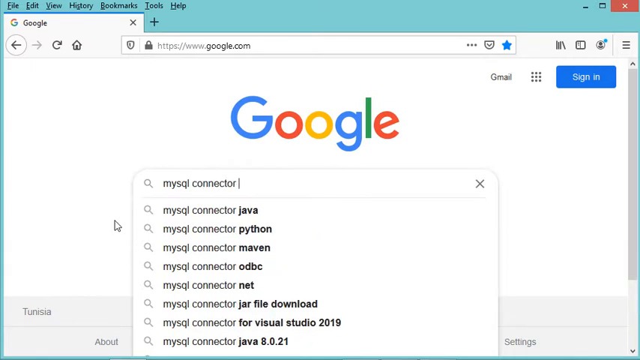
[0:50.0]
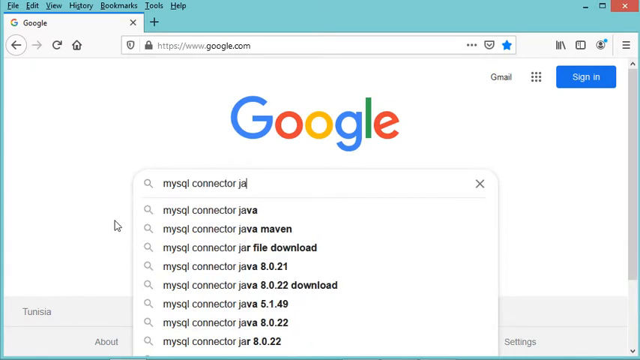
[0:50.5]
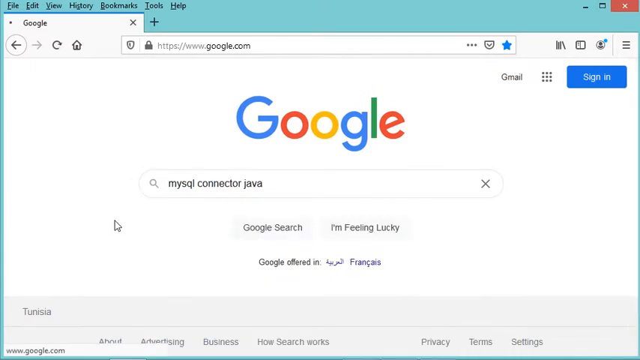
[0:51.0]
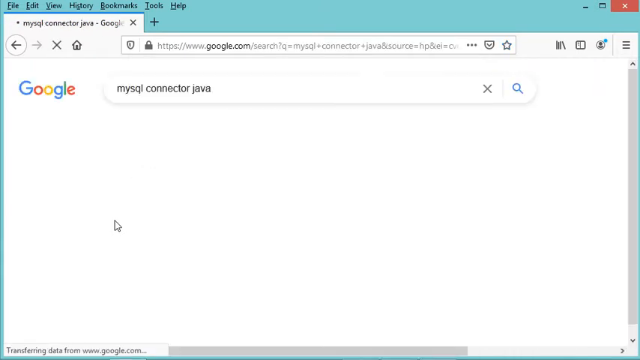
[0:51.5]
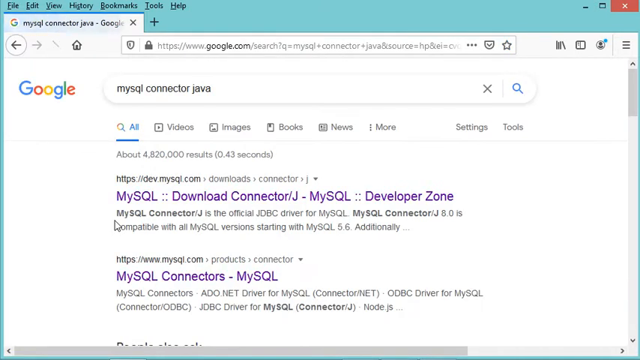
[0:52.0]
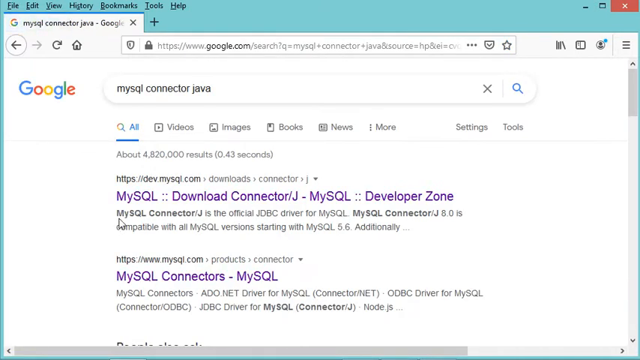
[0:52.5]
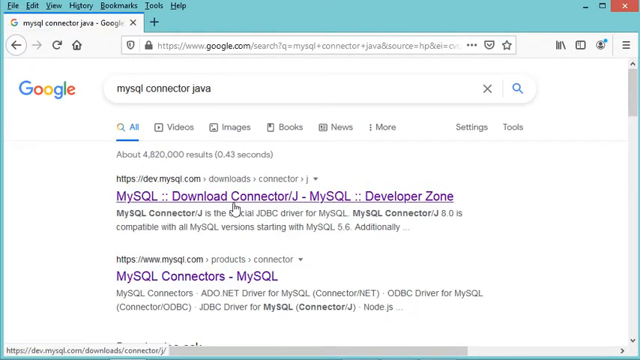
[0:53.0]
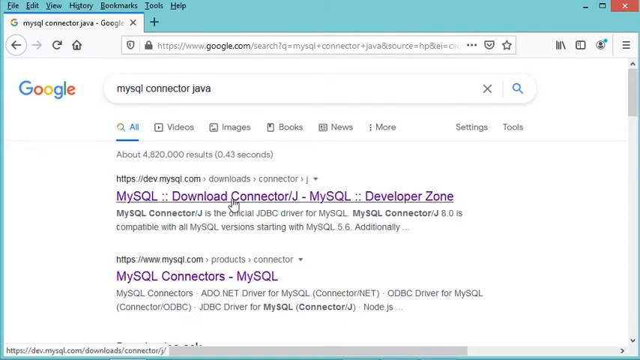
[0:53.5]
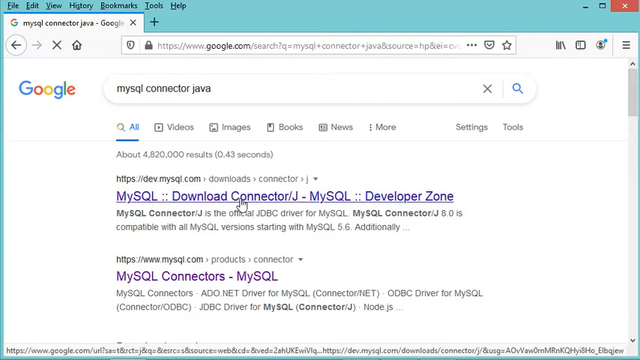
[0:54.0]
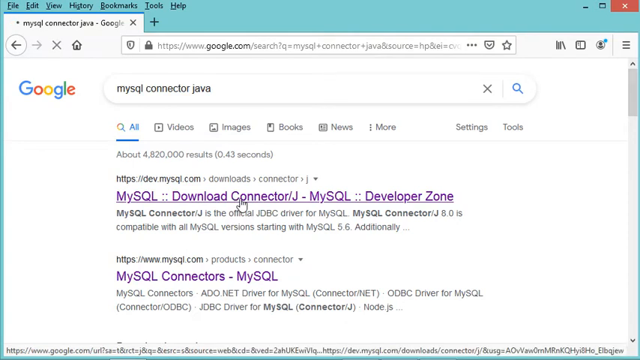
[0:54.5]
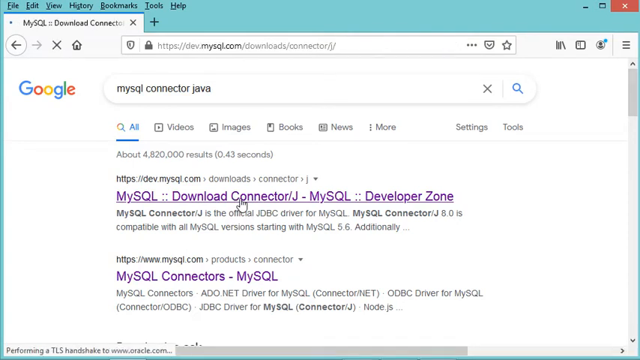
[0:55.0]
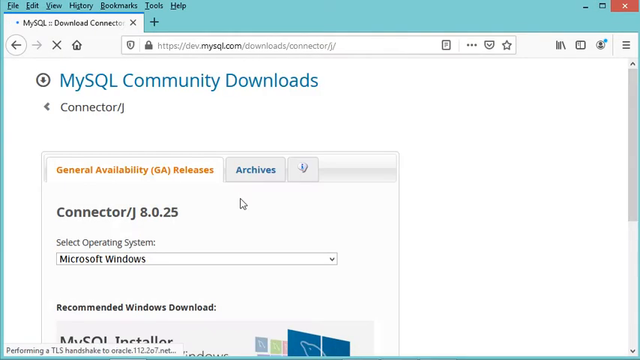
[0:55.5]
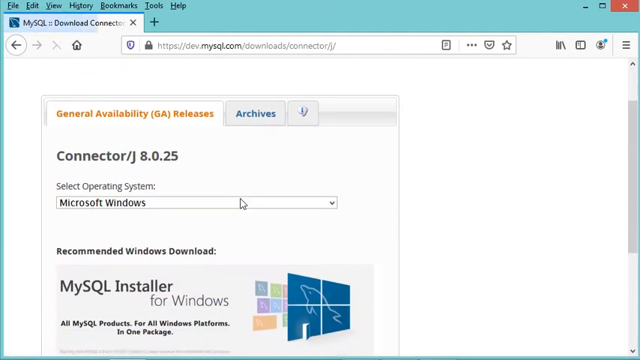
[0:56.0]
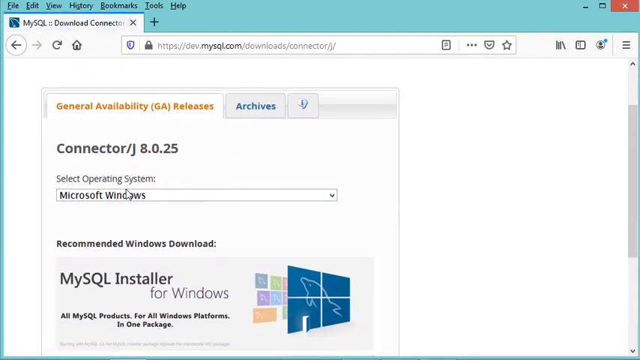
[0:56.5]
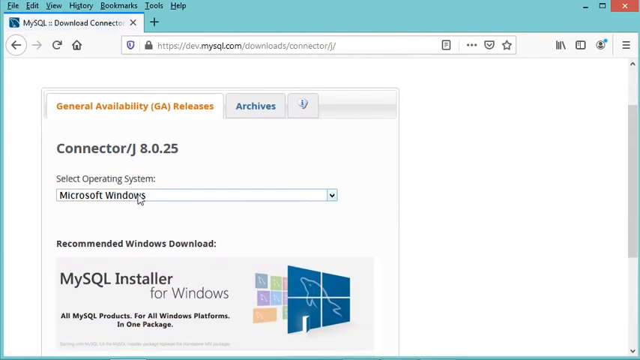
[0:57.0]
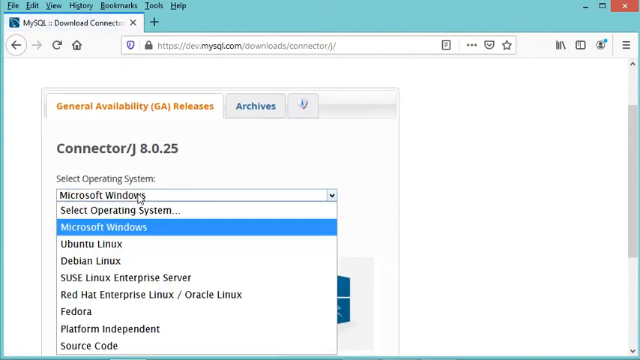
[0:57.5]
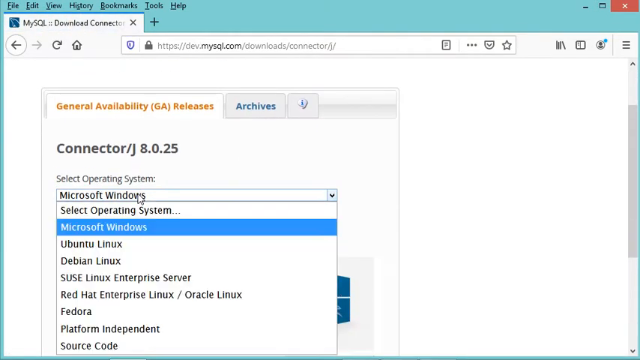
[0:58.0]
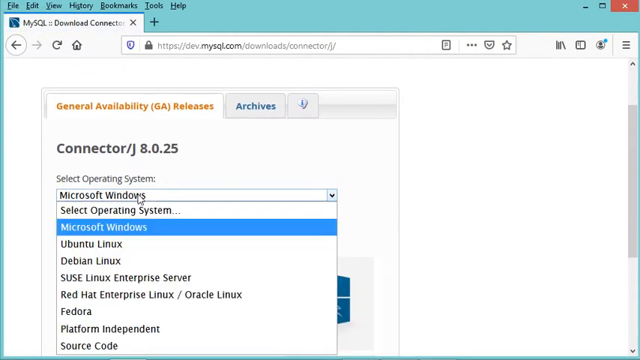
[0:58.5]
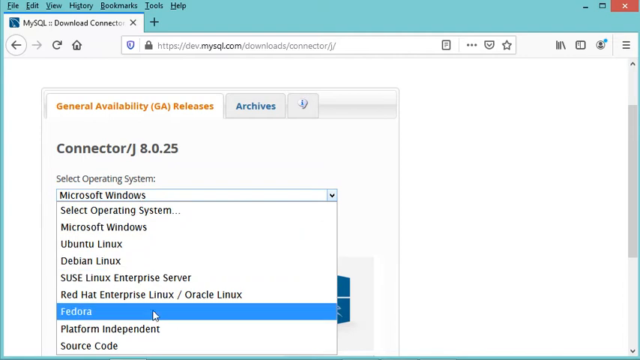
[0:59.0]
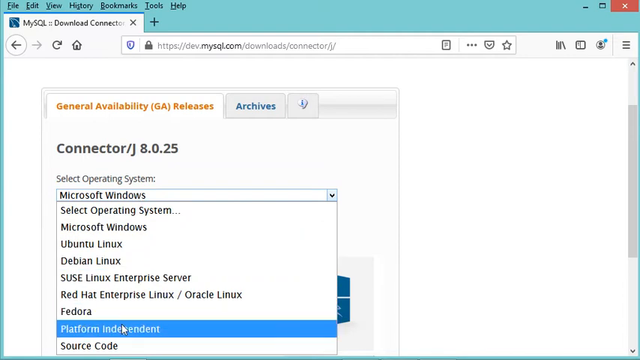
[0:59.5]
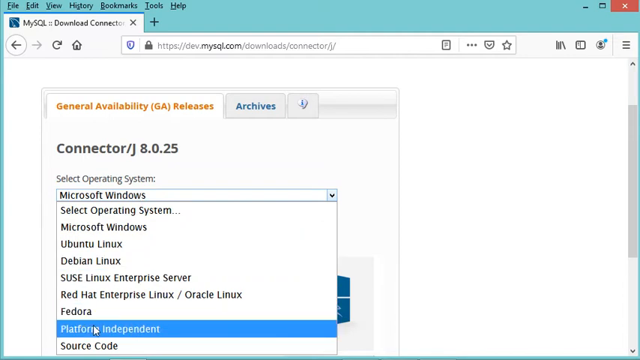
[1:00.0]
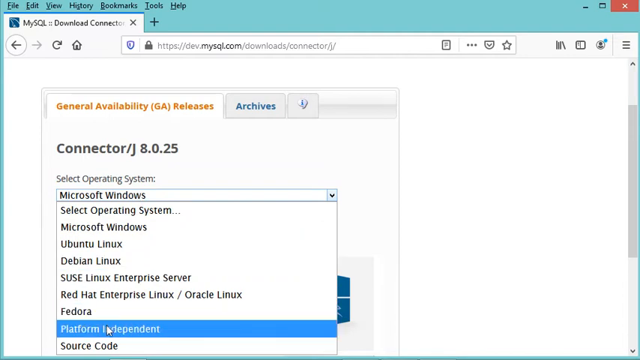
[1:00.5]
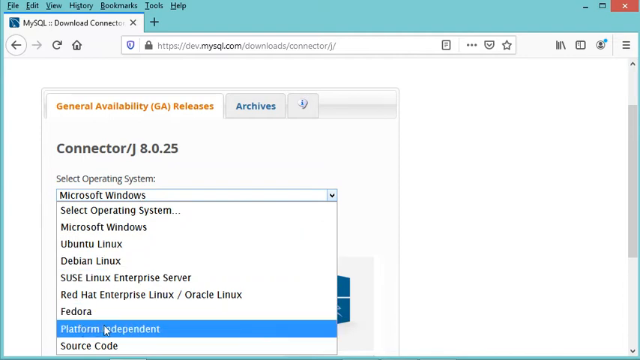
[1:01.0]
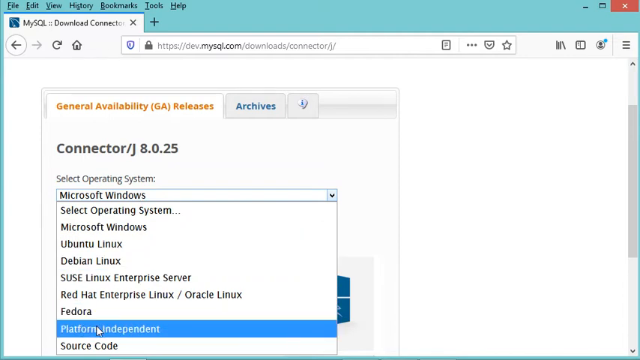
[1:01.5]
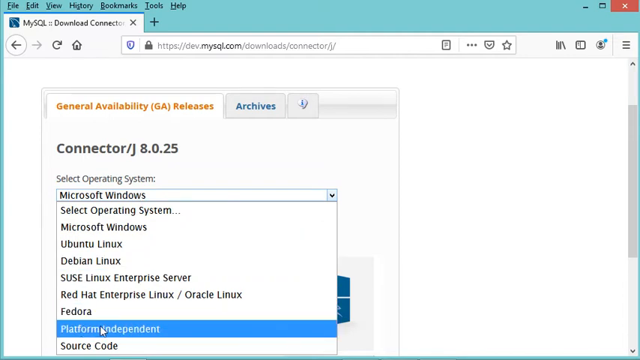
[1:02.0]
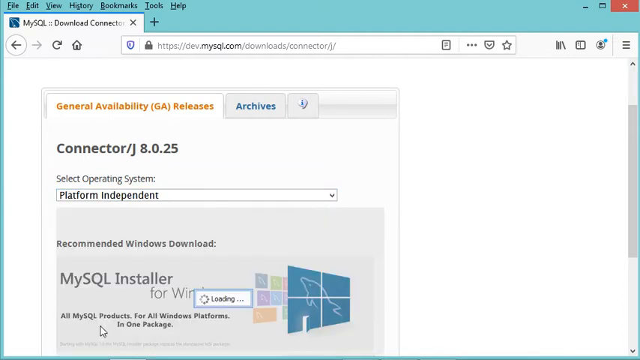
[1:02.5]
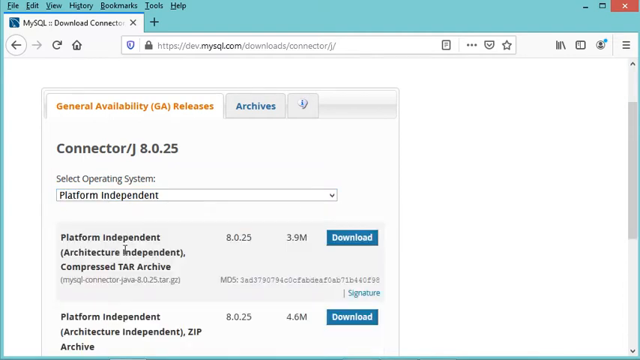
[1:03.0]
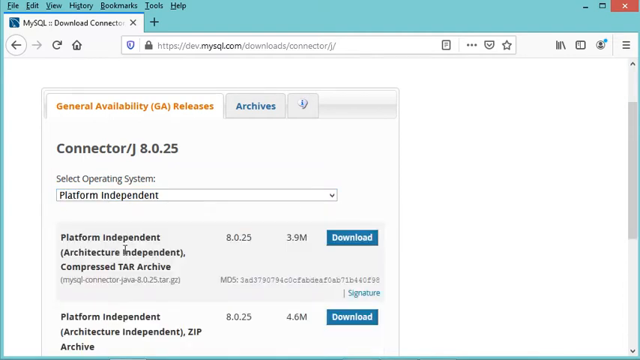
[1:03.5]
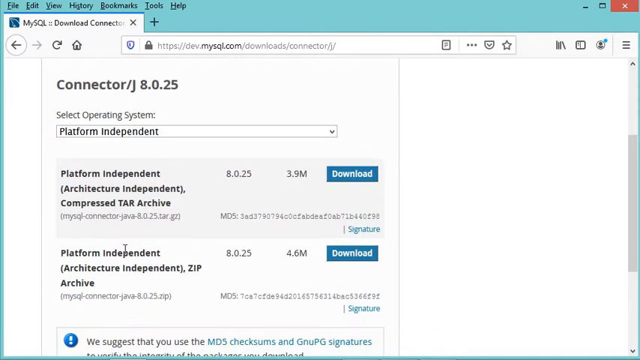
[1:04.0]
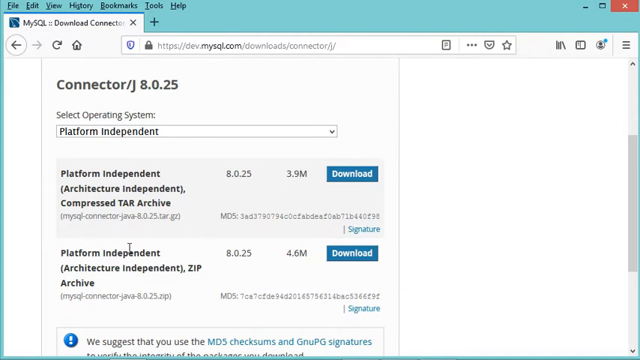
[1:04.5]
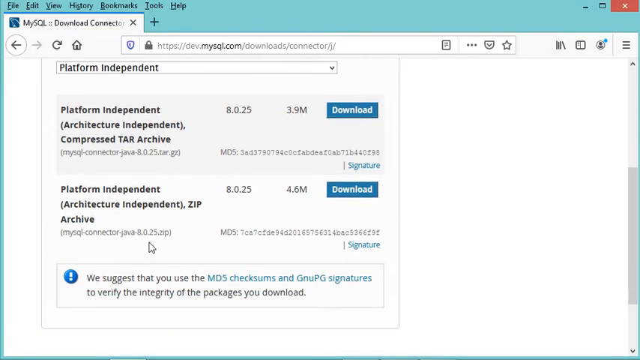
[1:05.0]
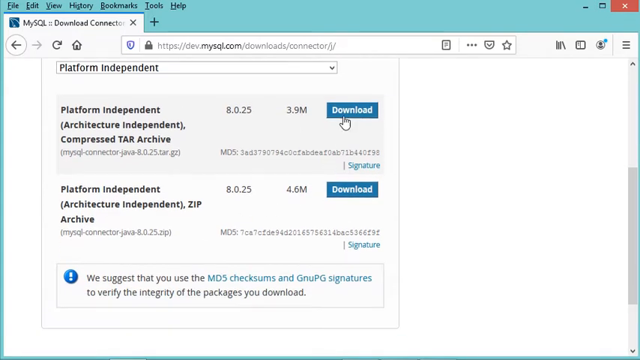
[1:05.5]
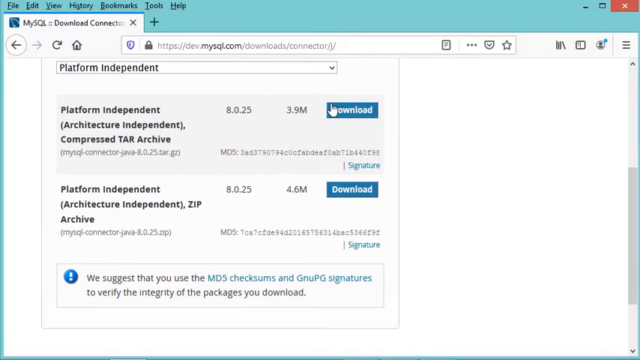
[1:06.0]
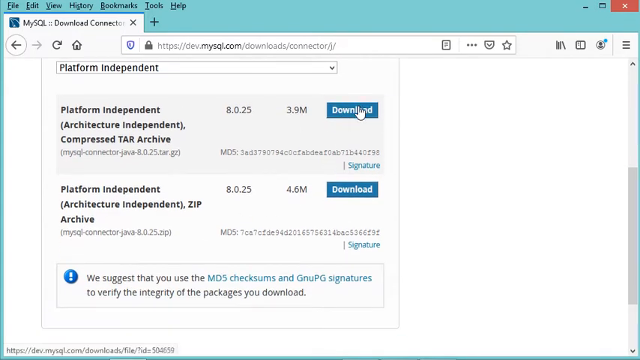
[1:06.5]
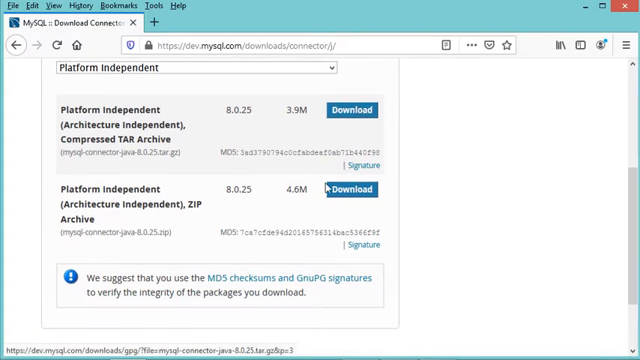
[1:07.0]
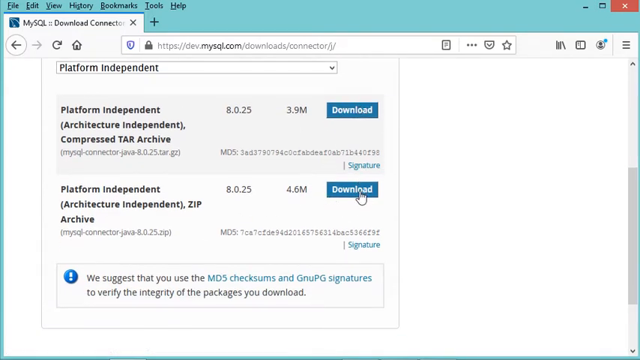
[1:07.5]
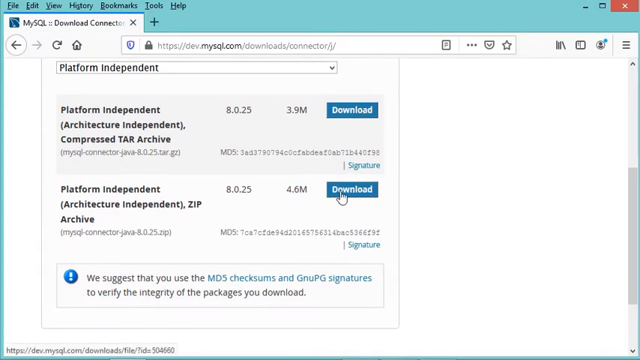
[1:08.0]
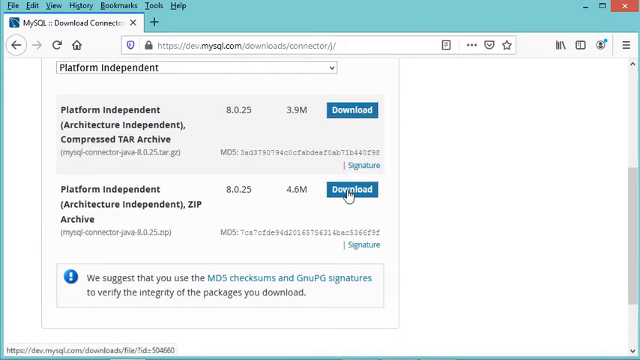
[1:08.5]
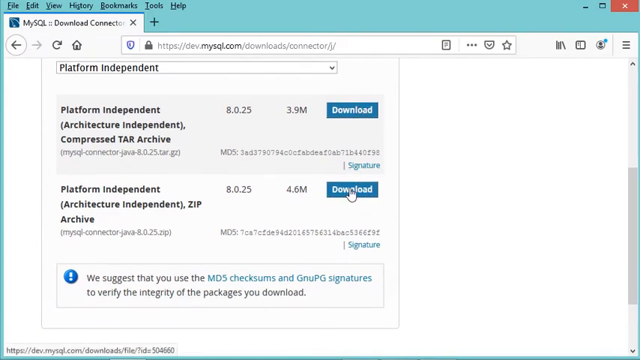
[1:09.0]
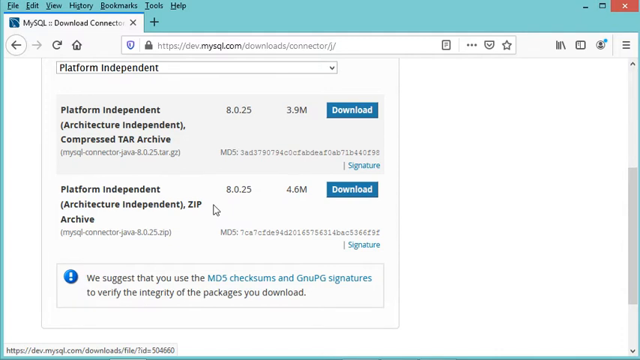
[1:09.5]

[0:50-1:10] On the Google search engine, the user types "MySQL Connector Java" and presses enter. The results page shows about 4,820,000 results loaded in .043 seconds. One result is for "HTTPS dev.mysql.com" and reads "MySQL Download Connector J MySQL Developer Zone". The user clicks that first result and reaches a screen titled "MySQL Community Downloads Connector", with general availability (GA) releases as well as archives. "Connector J 8.025" is listed with an option to select the operating system. Clicking it shows many options: Microsoft Windows, Ubuntu Linux, Debian Linux, SUSE Linux, Enterprise Server, Red Hat Enterprise Linux, Oracle Linux, Fedora and Platform Independent. The user clicks Platform Independent, and download options appear: a Platform Independent, Architecture Independent Compressed TAR Archive at 3.9 million, and a Platform Independent, Architecture Independent Zip Archive at 4.6 million. The mouse kind of moves back and forth between the two options.